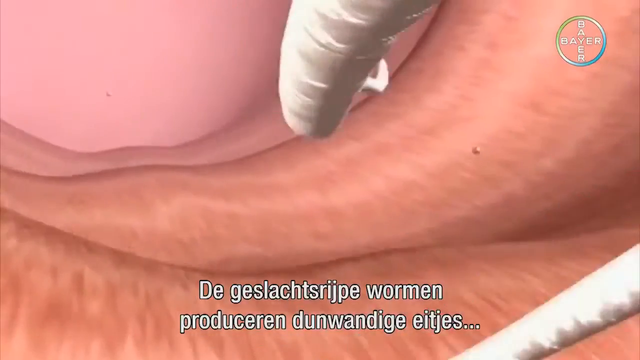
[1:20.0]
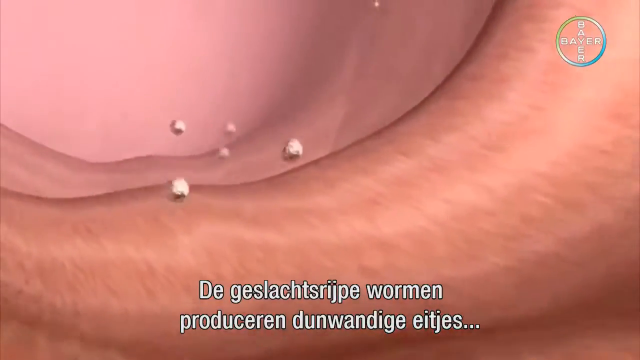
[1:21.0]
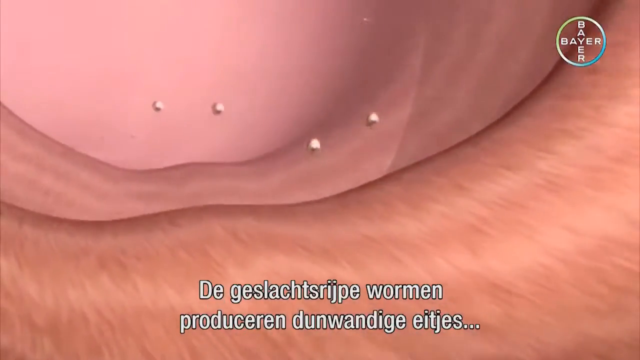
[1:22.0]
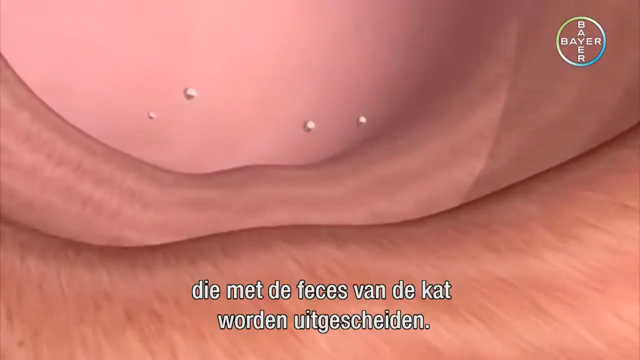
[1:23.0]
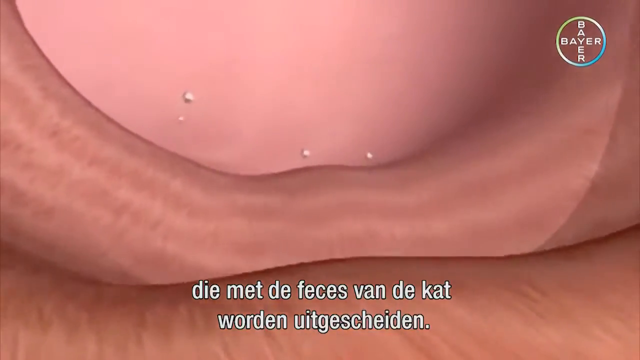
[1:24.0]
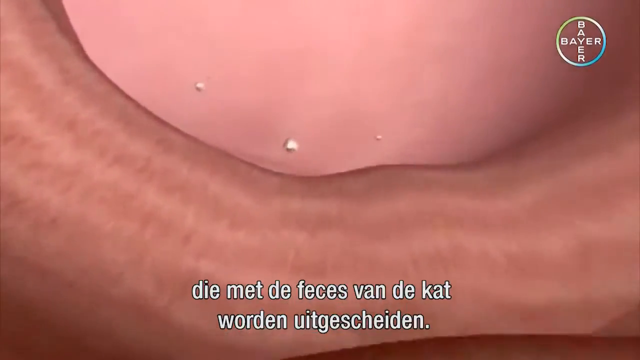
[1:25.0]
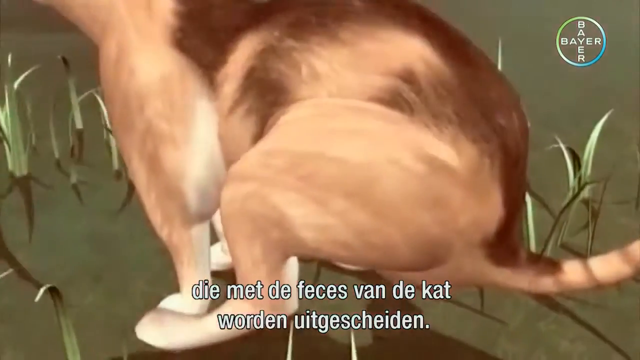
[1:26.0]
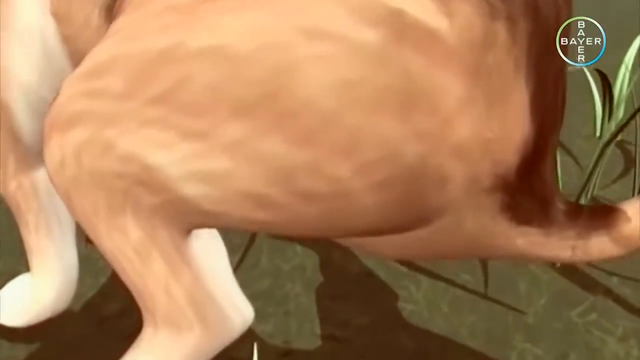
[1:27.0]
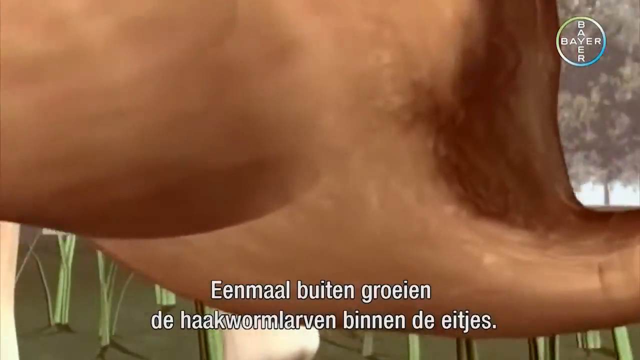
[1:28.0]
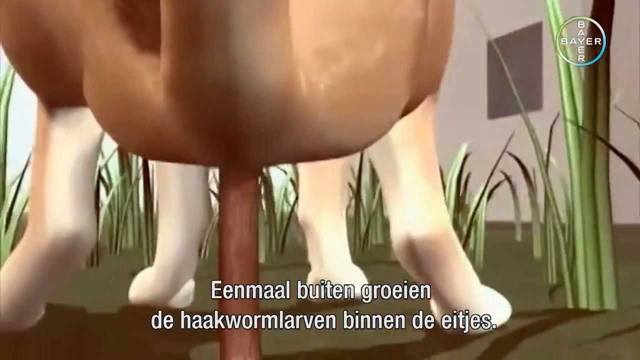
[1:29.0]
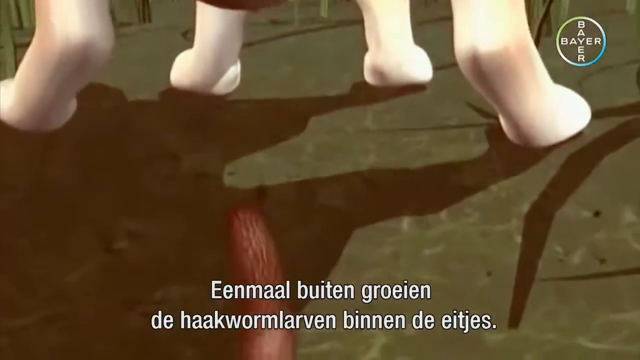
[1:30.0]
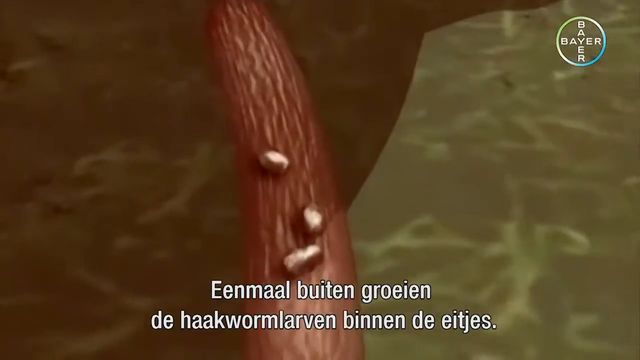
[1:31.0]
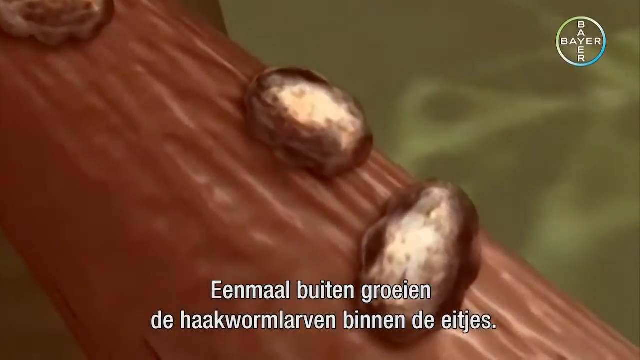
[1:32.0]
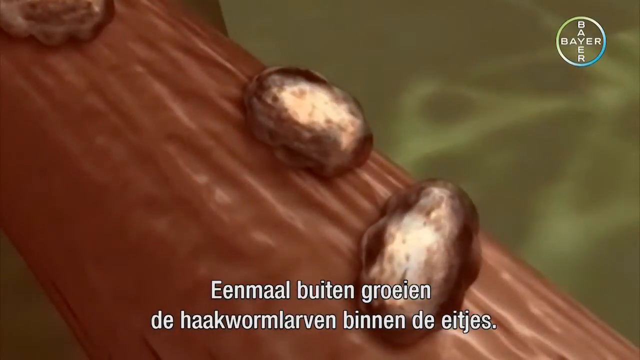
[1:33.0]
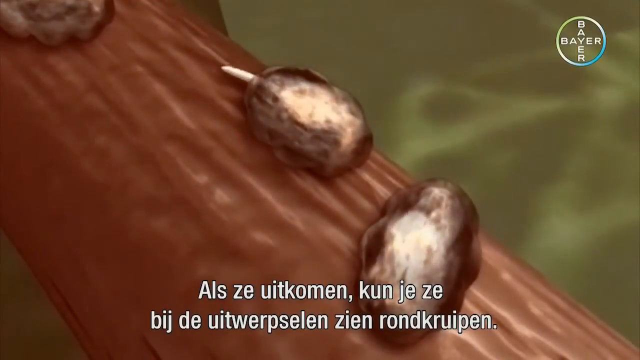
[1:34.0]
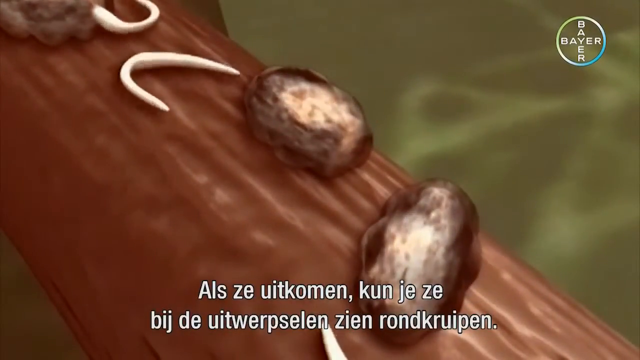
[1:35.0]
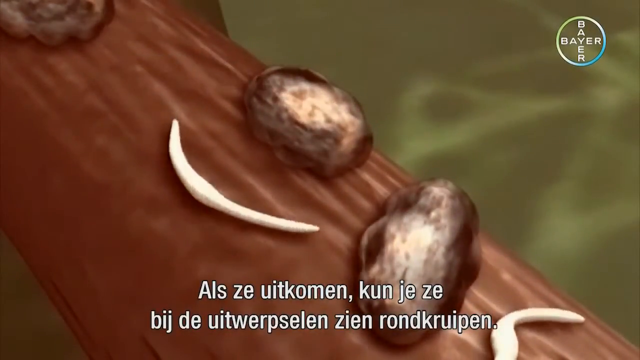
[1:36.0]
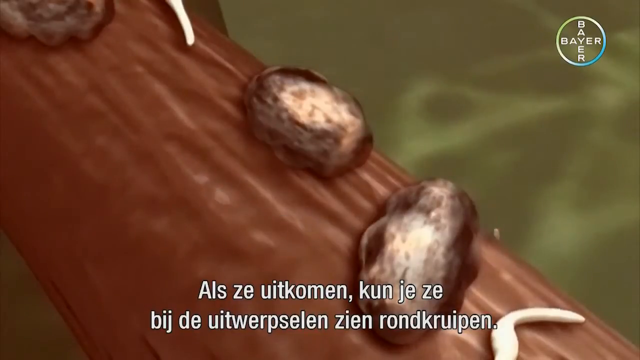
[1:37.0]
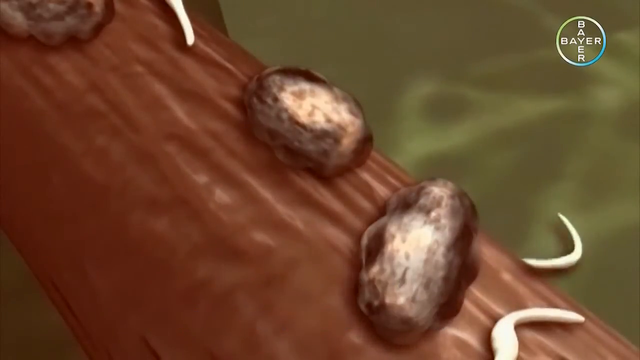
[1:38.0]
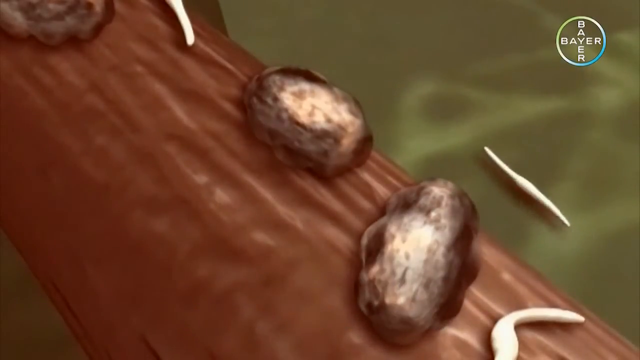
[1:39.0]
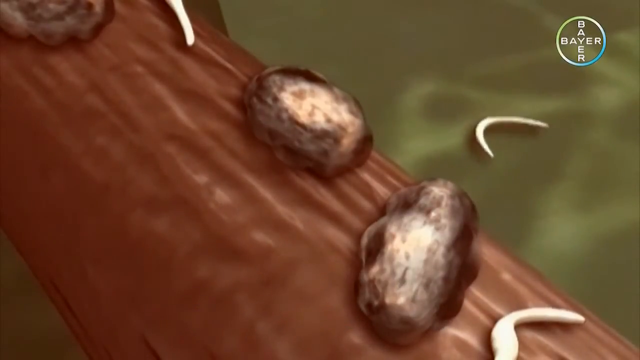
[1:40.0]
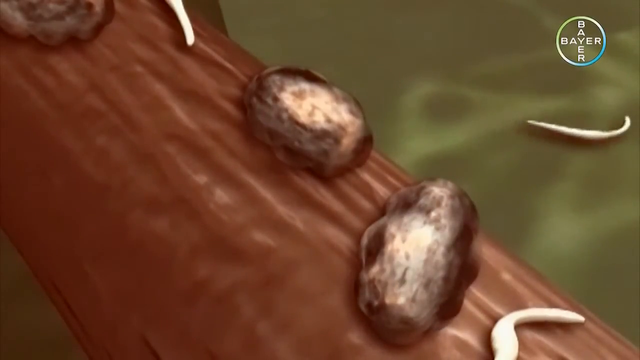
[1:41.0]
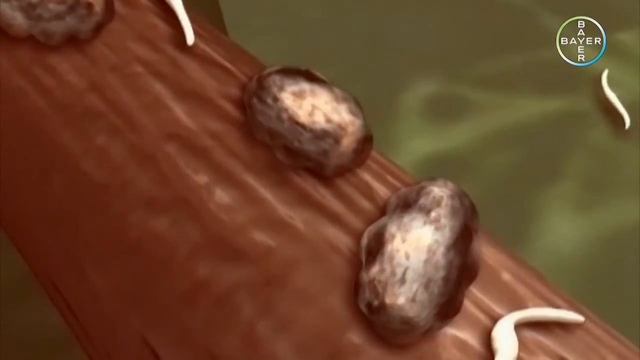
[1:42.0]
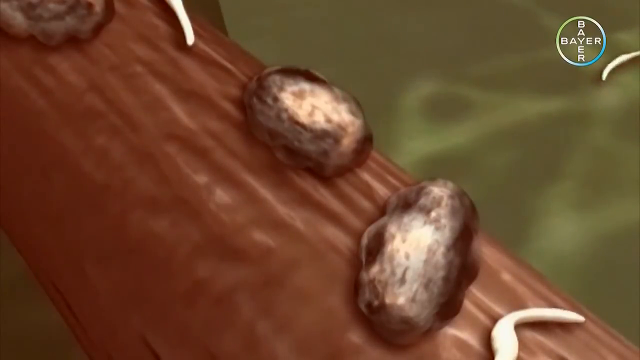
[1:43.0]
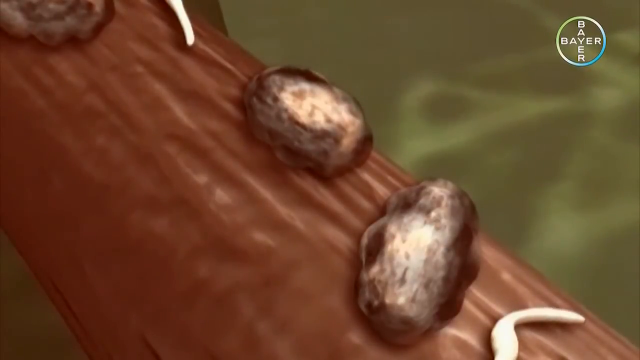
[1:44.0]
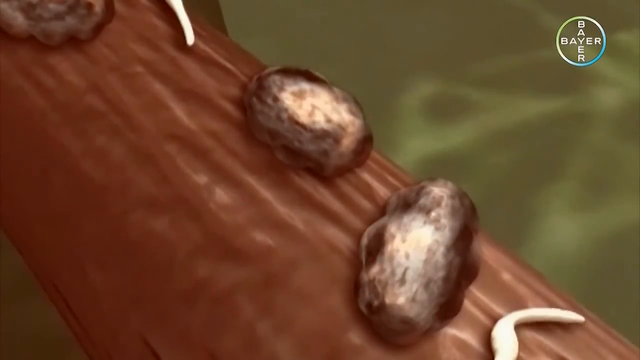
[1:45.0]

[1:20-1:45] Small white worms swim around a brownish area, with other organisms floating around as well. Words in a different language pop up at the bottom of the screen, and at the top right is a circle with the word "Bayer" in two places, connecting with the letter Y. Small circle-like organisms travel down along a brown surface. Then what looks to be a cat is shown outside using the bathroom, and worms come out of some of the areas of what it used the bathroom on. As the worms come out of the different circles, they appear to go down into the grass.